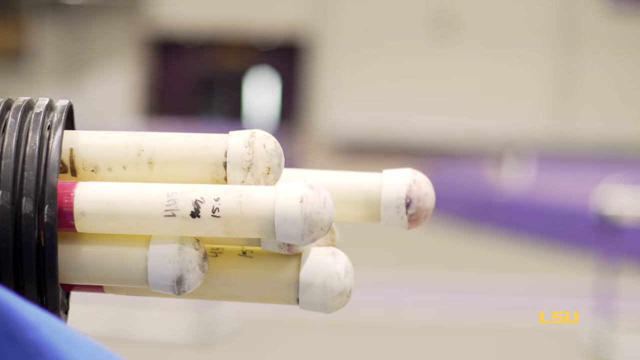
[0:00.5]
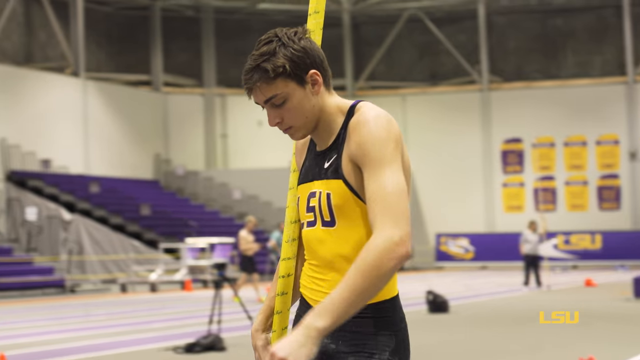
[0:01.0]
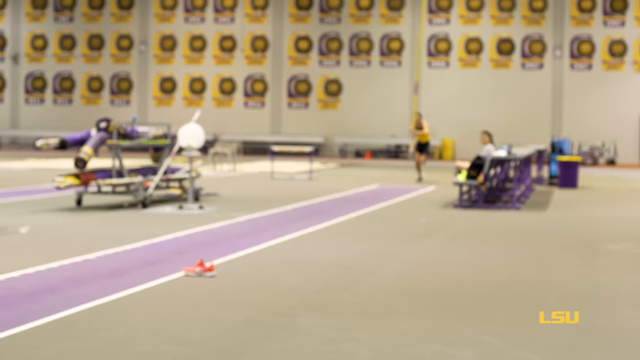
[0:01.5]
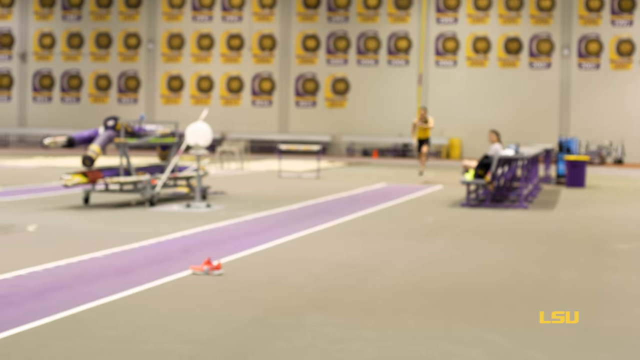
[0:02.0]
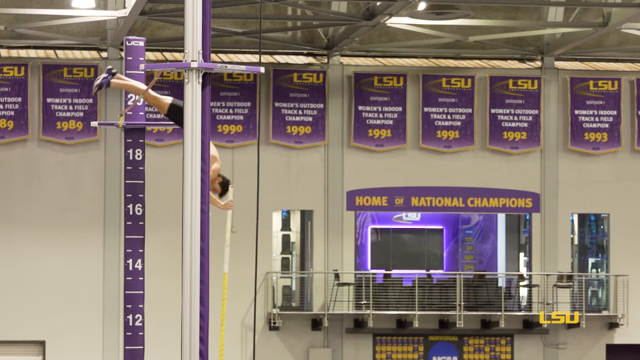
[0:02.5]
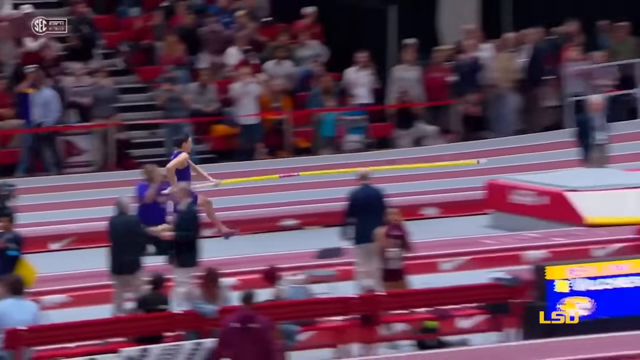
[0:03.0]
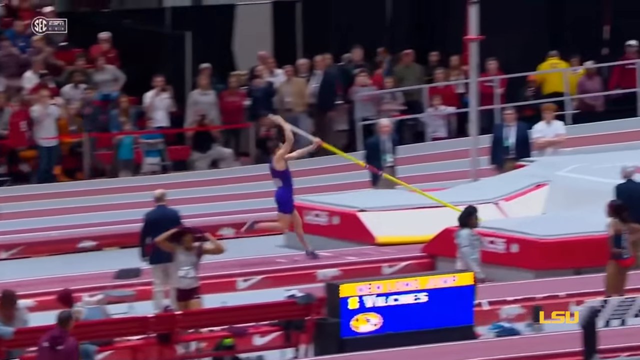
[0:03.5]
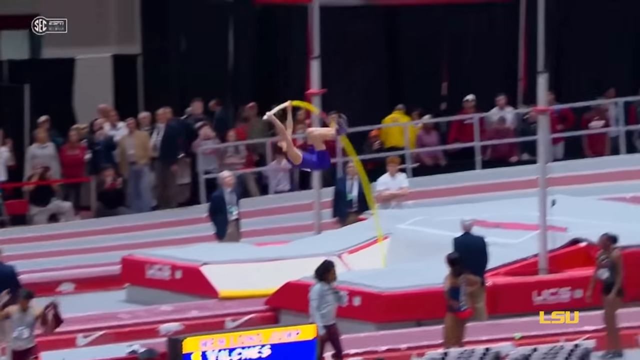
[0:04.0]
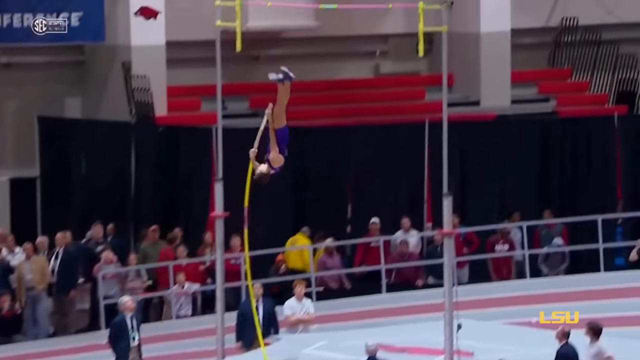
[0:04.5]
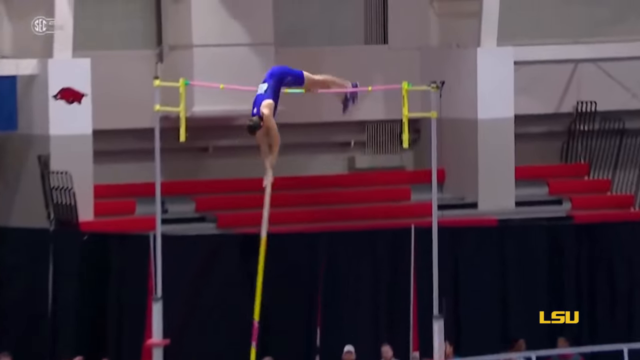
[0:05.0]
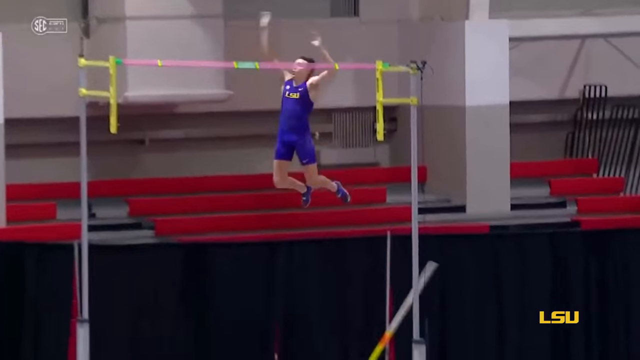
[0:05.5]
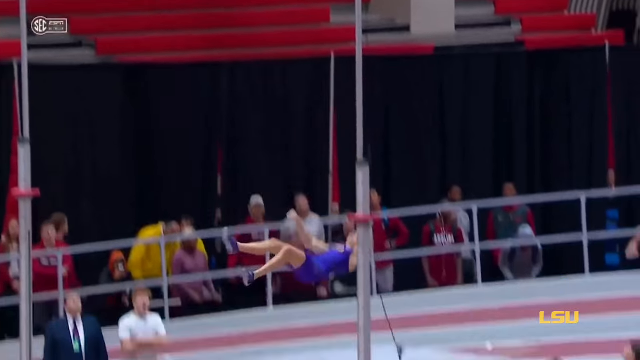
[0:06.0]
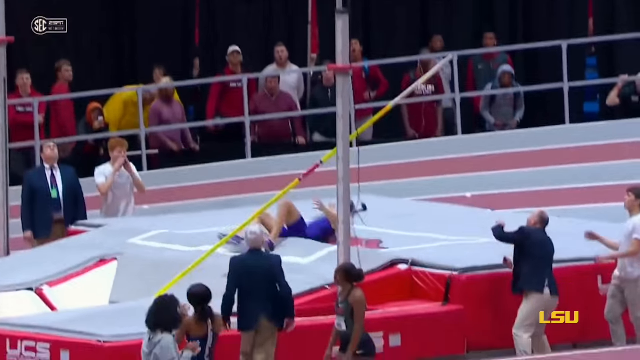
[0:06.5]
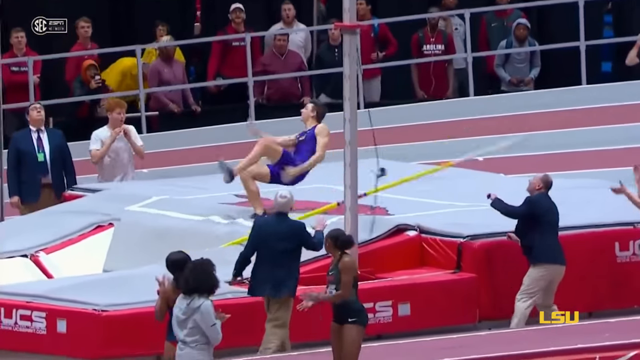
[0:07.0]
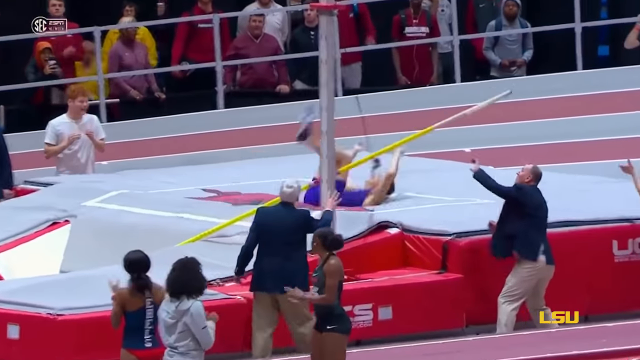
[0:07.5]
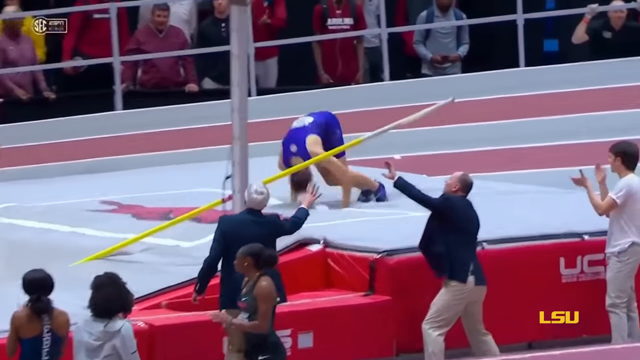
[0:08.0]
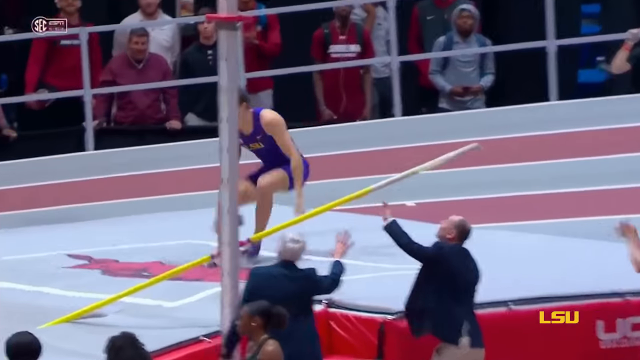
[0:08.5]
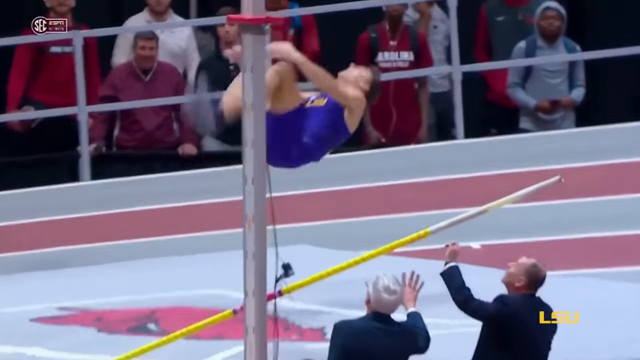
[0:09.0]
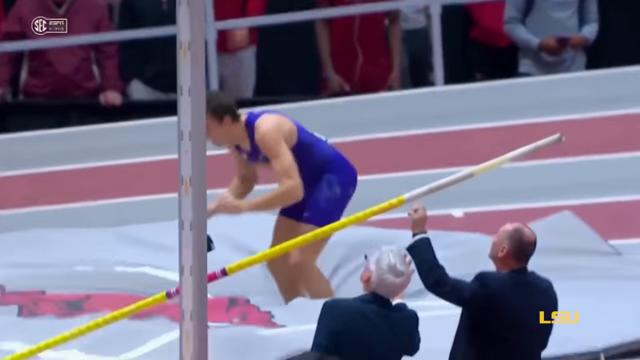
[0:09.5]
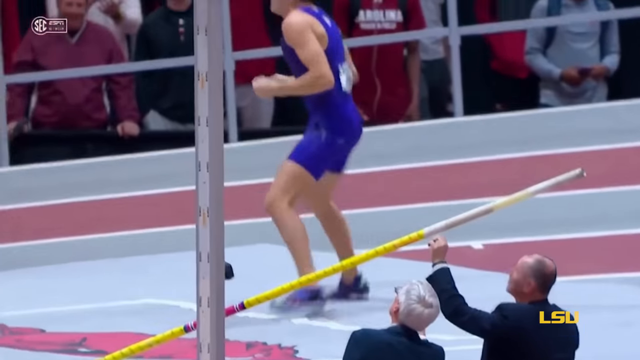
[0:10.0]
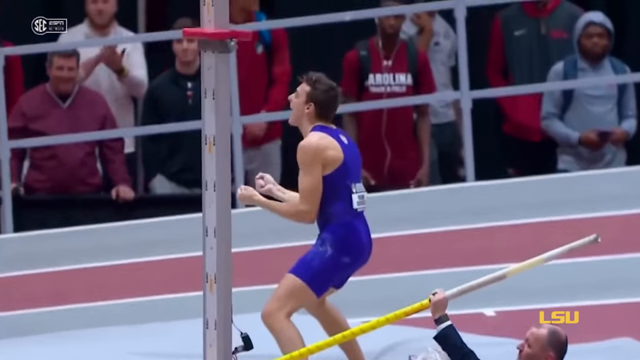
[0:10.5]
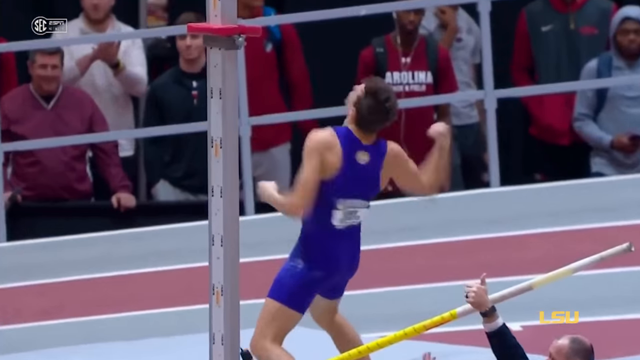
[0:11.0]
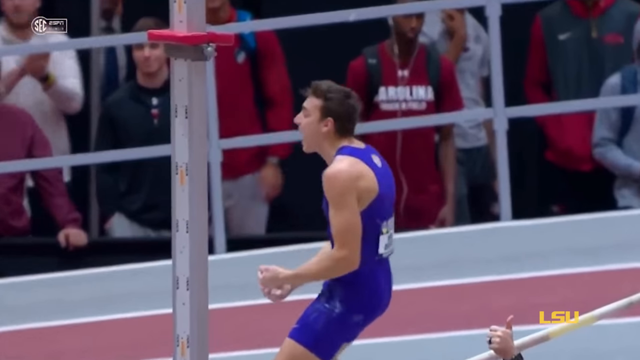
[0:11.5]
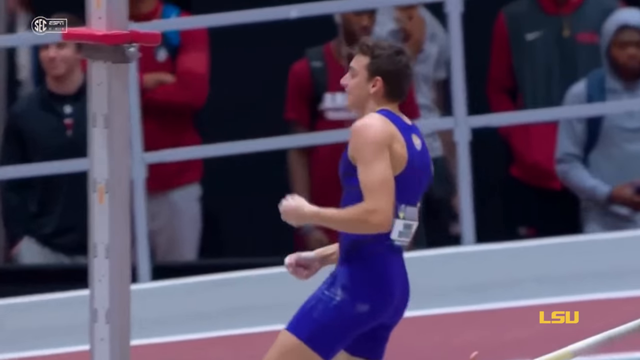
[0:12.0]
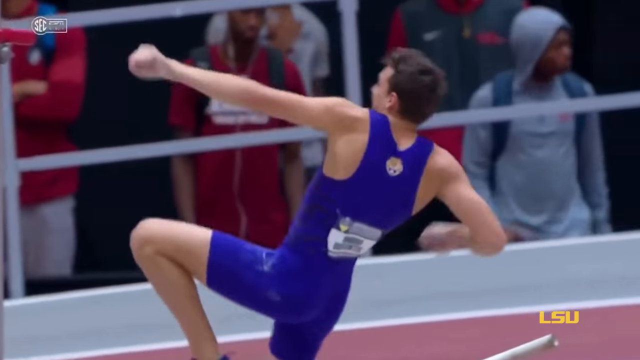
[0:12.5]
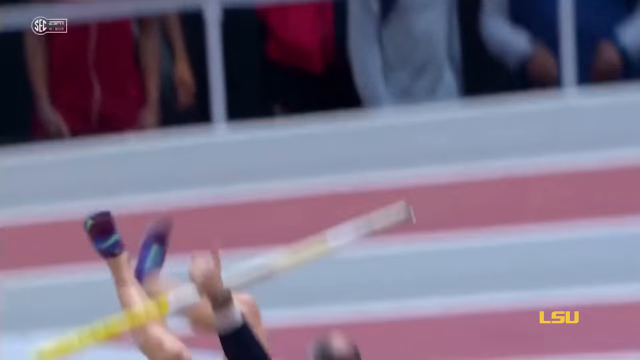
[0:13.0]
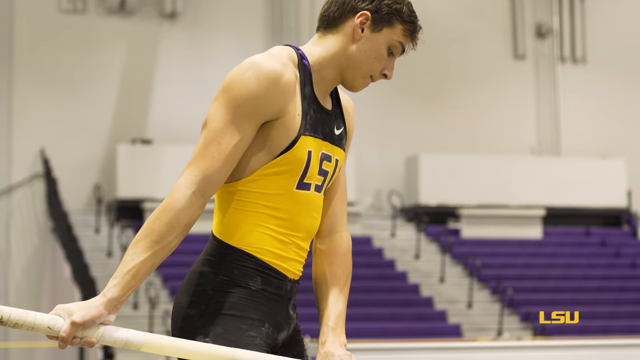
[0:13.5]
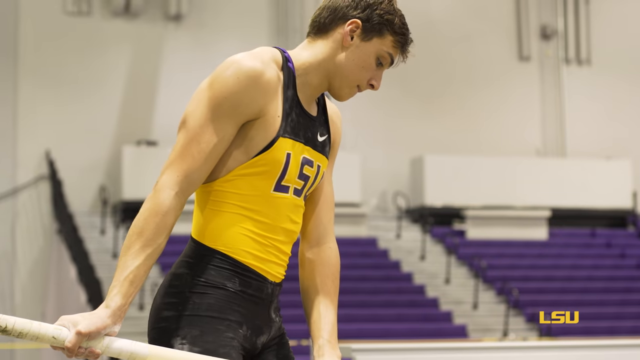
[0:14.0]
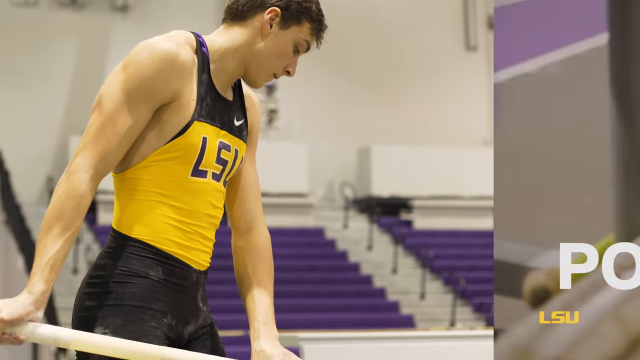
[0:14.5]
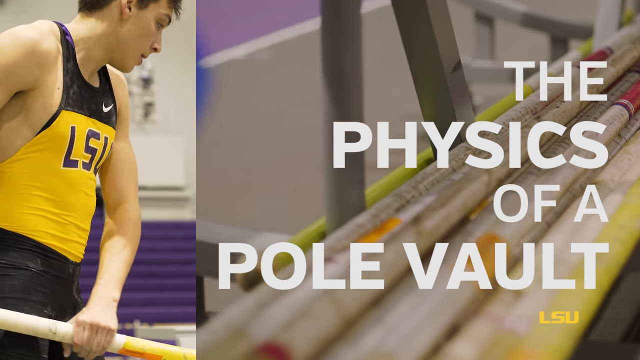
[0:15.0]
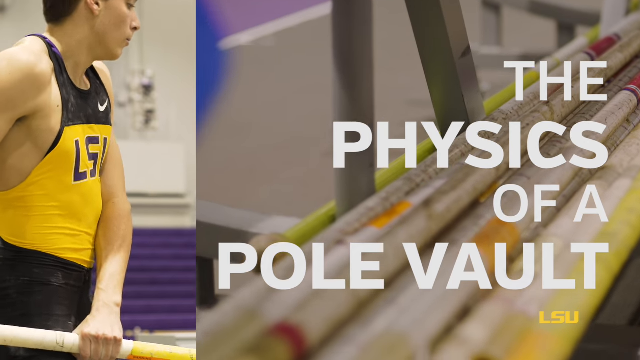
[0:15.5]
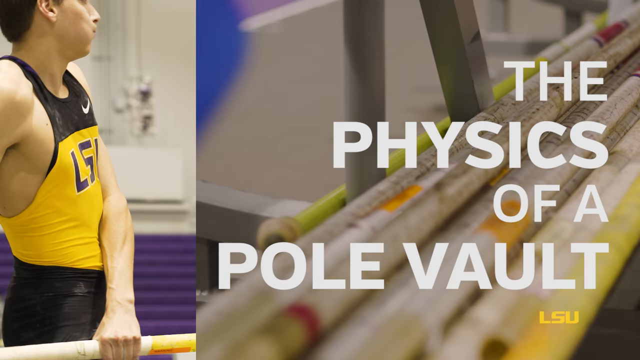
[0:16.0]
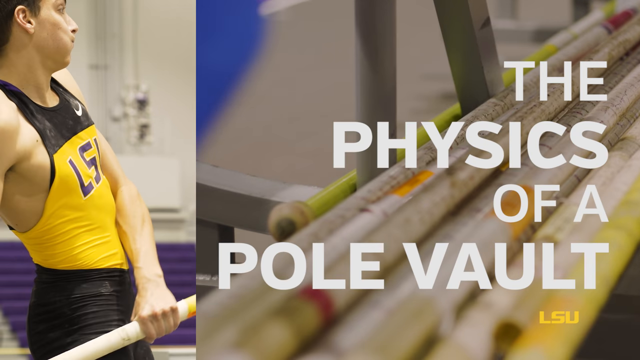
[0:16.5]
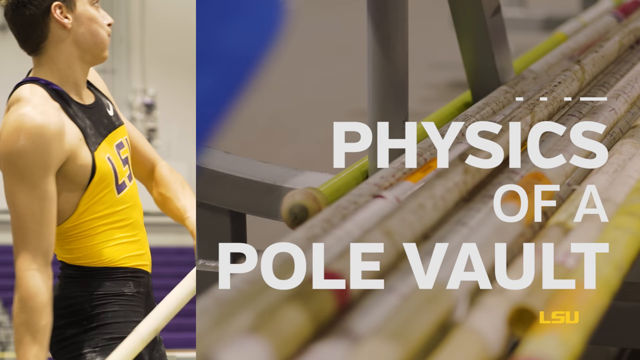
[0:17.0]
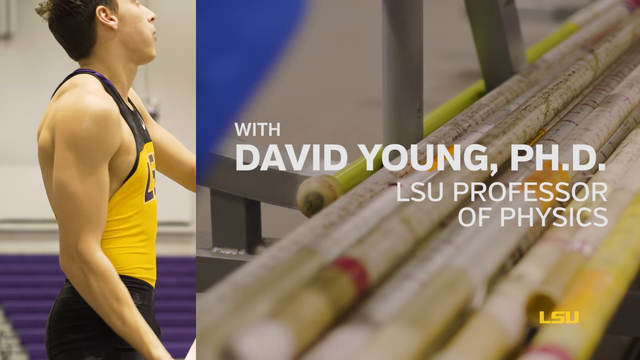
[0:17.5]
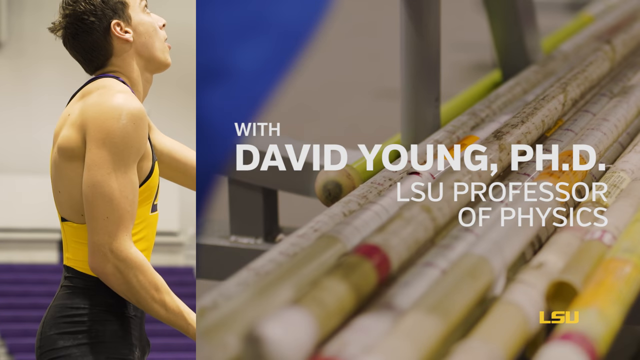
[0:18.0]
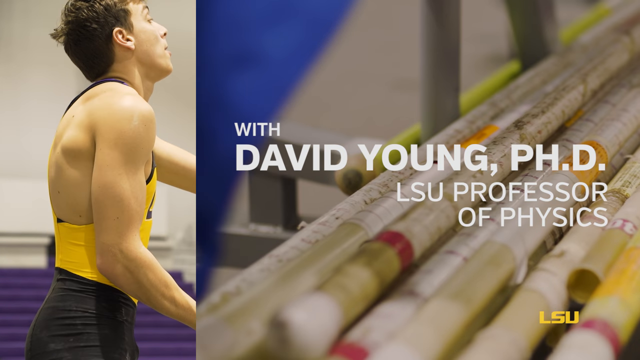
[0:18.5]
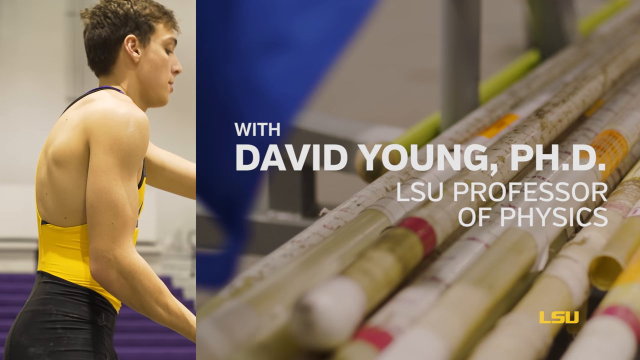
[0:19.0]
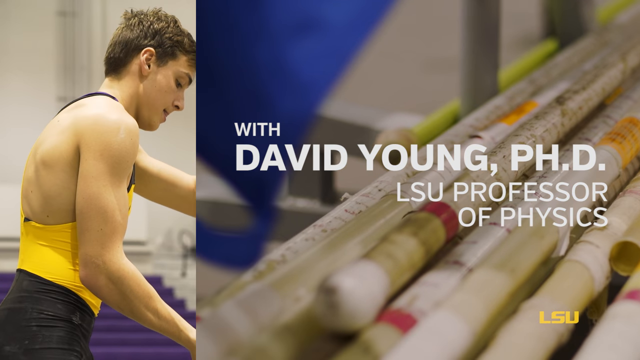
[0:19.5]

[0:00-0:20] The video opens with a preview of pole vaults and the poles. A student wearing an LSU jersey holds a pole, and various highlights of pole vaulting show how high it can go. One of the poles is set all the way up to the maximum height, and the LSU student hops over it. The student, wearing a blue, purple and yellow leotard, is very happy and does a backflip to celebrate. Words then appear on the video, such as "the physics of a pole vault," along with a credit to David Young, PhD, the LSU professor of physics.